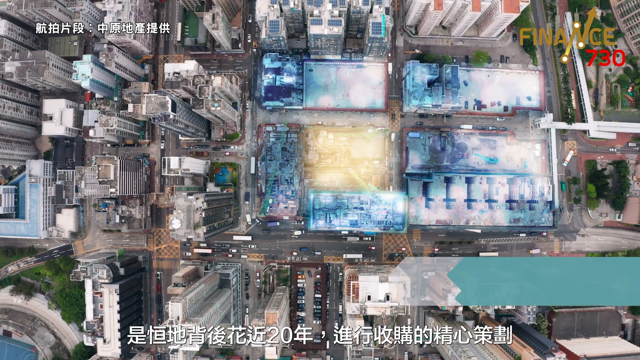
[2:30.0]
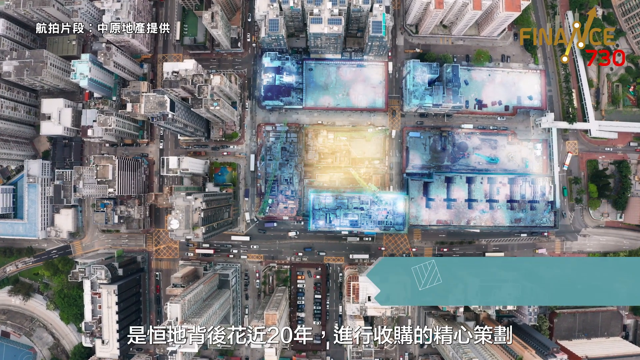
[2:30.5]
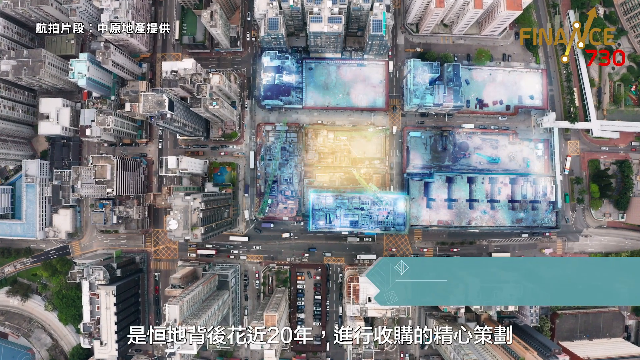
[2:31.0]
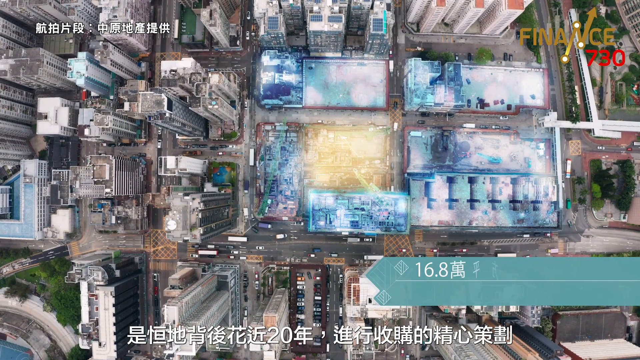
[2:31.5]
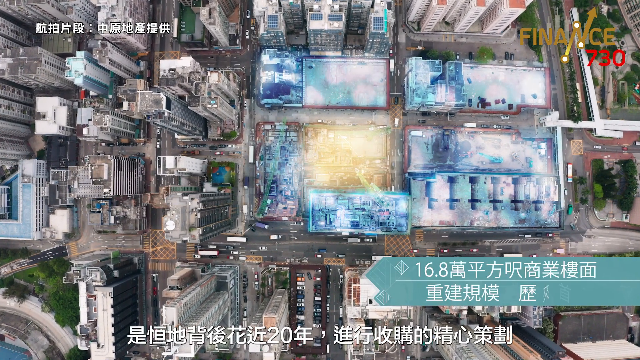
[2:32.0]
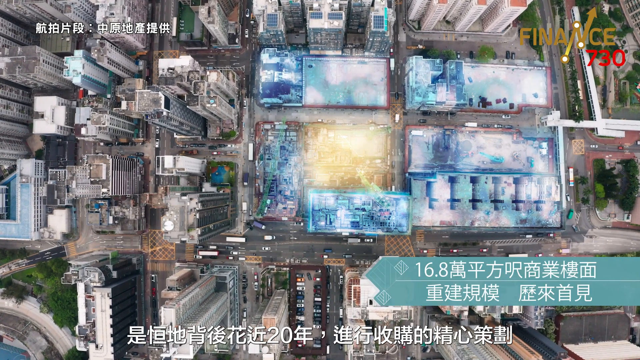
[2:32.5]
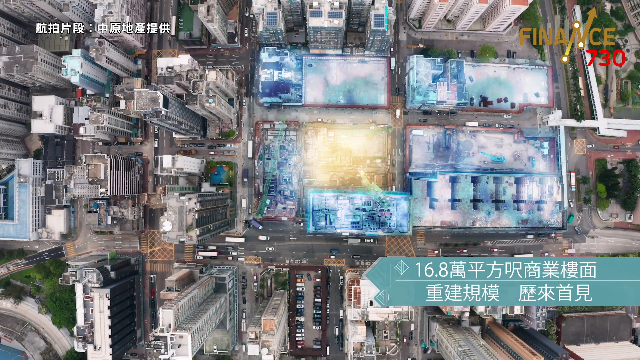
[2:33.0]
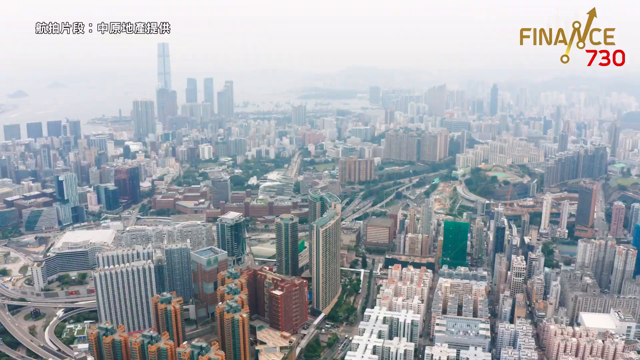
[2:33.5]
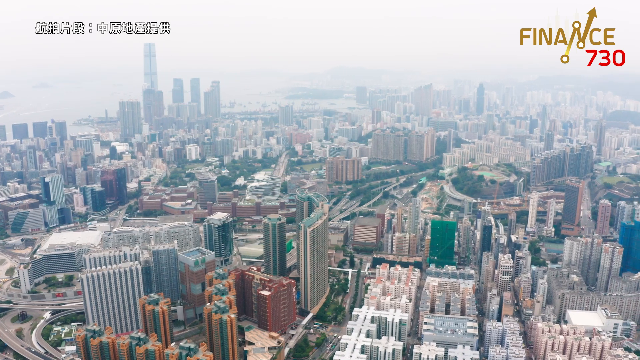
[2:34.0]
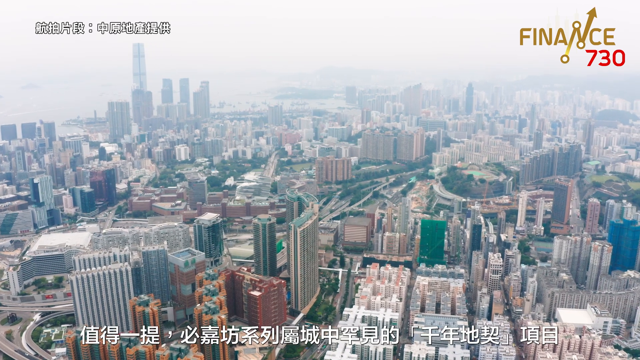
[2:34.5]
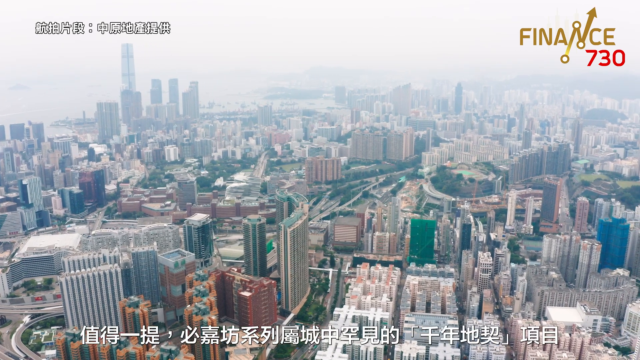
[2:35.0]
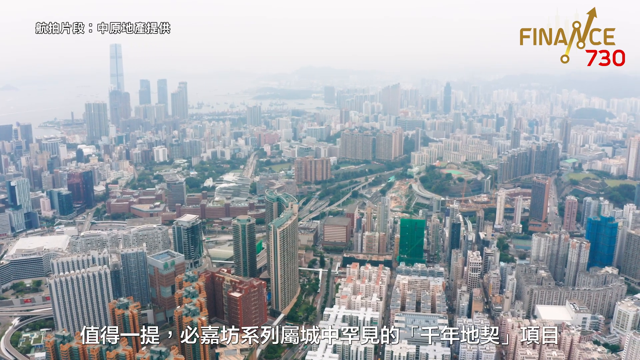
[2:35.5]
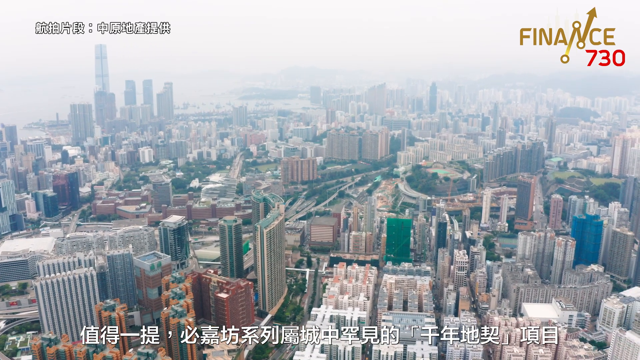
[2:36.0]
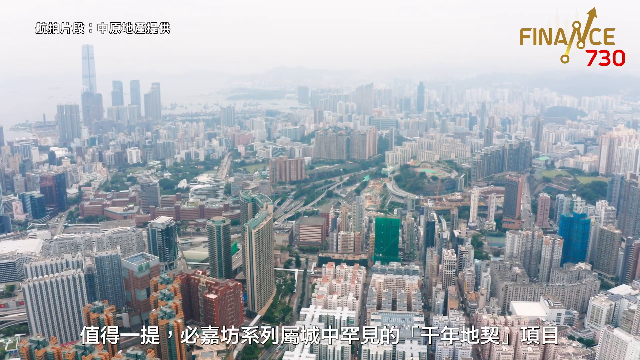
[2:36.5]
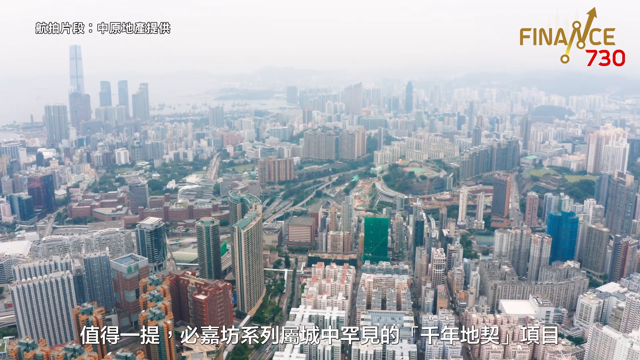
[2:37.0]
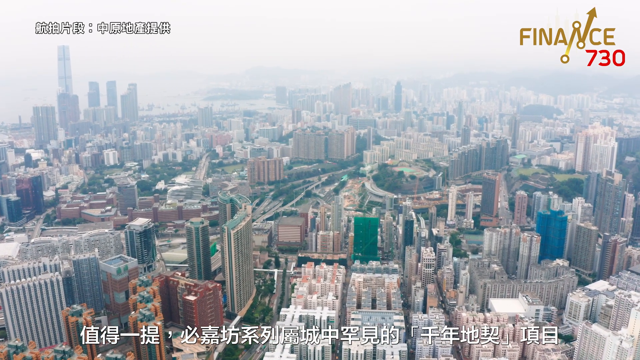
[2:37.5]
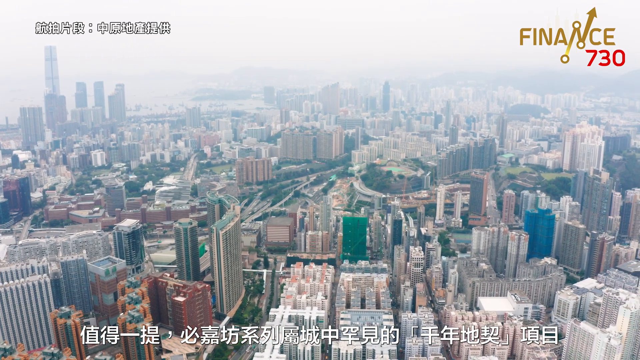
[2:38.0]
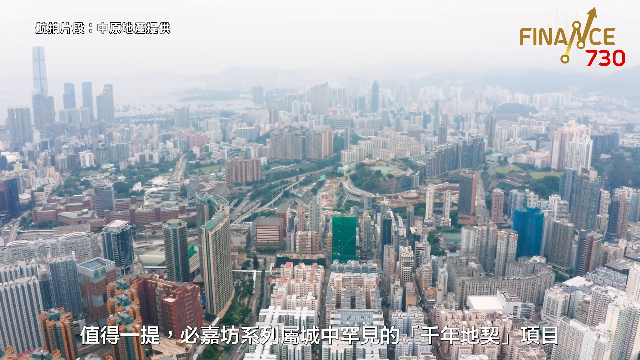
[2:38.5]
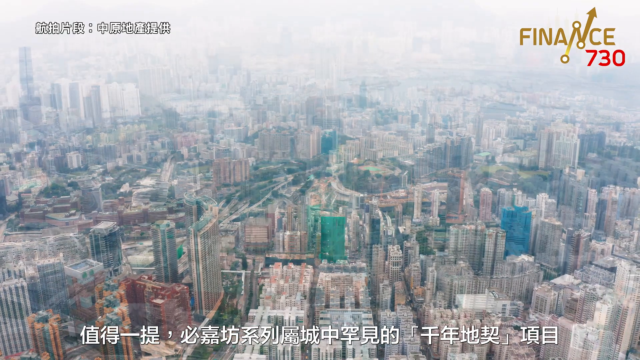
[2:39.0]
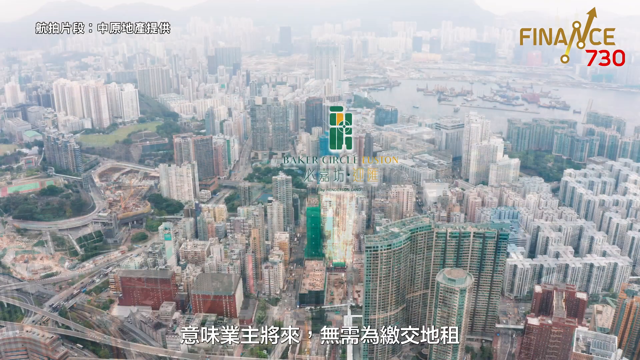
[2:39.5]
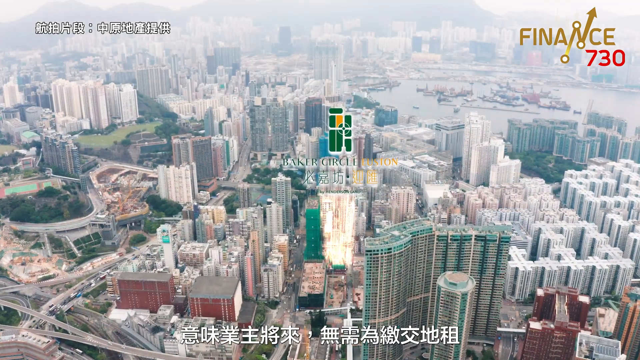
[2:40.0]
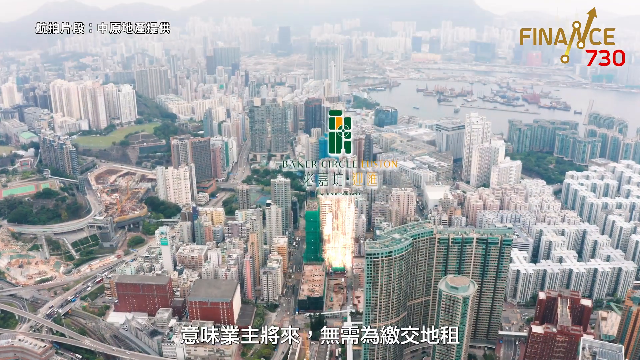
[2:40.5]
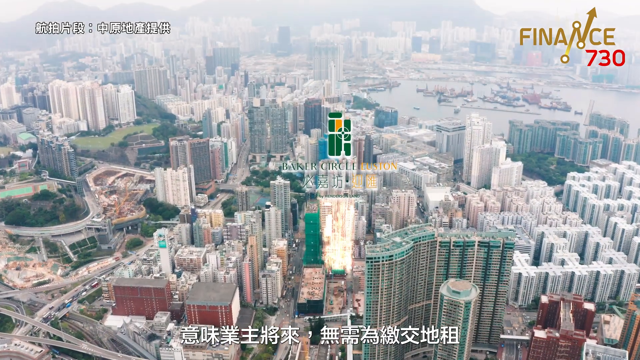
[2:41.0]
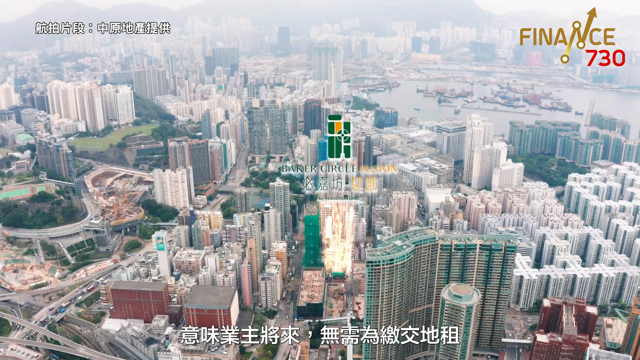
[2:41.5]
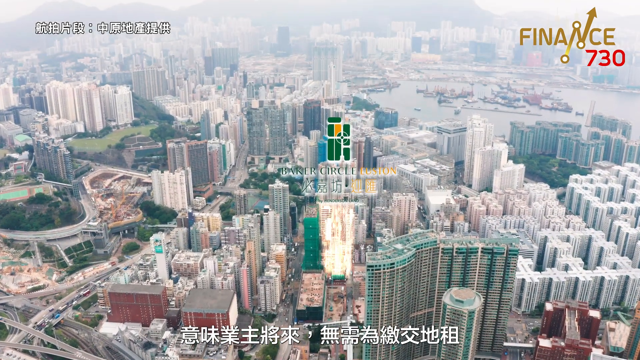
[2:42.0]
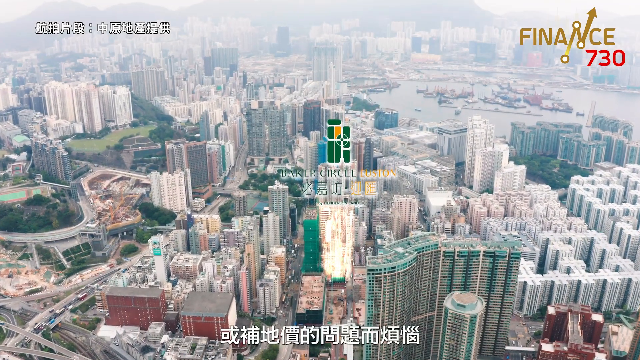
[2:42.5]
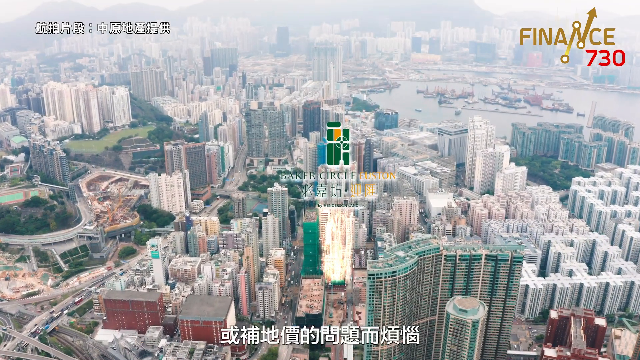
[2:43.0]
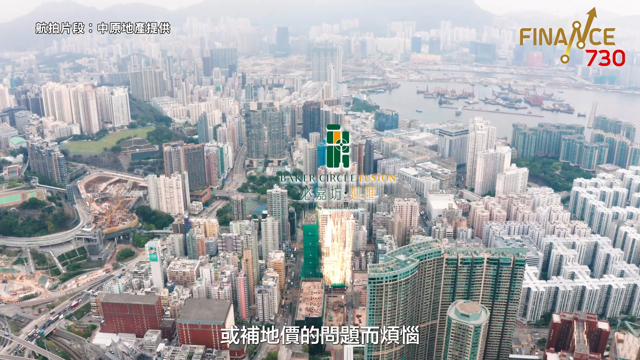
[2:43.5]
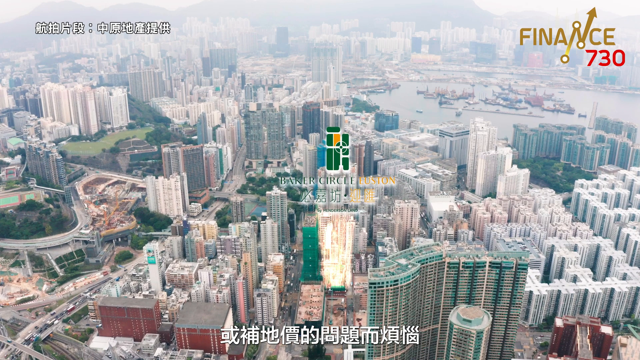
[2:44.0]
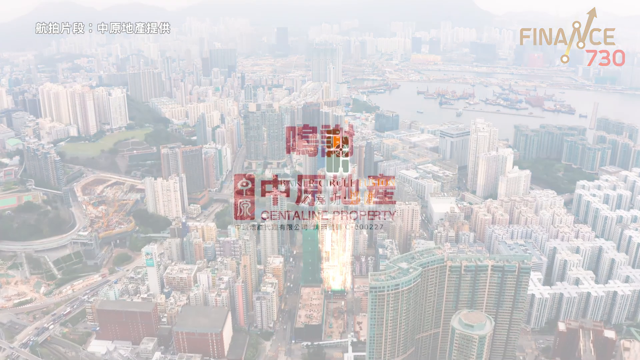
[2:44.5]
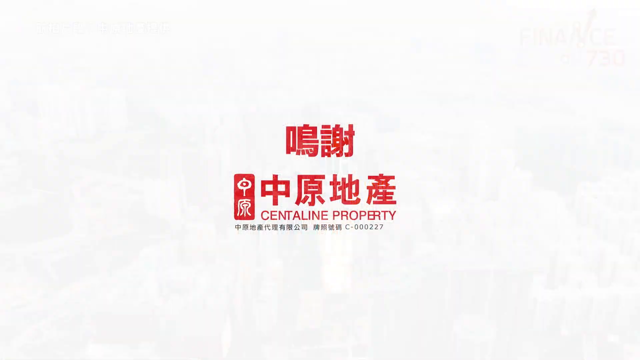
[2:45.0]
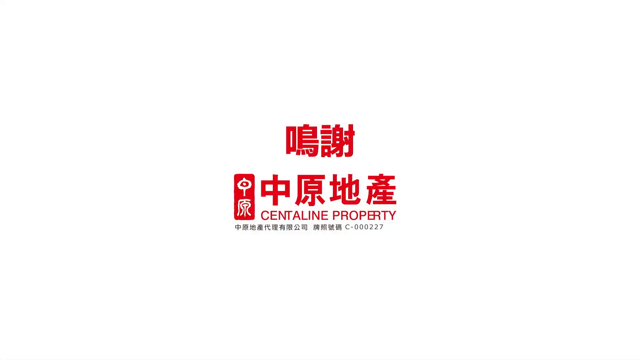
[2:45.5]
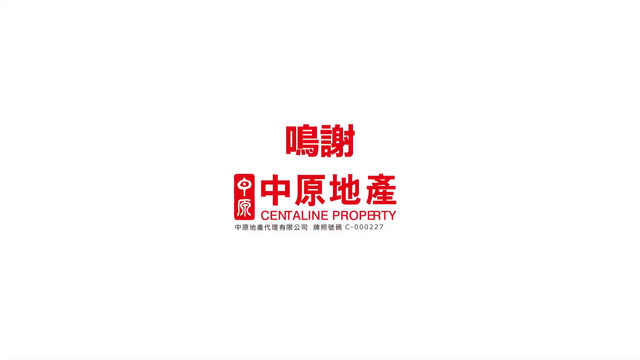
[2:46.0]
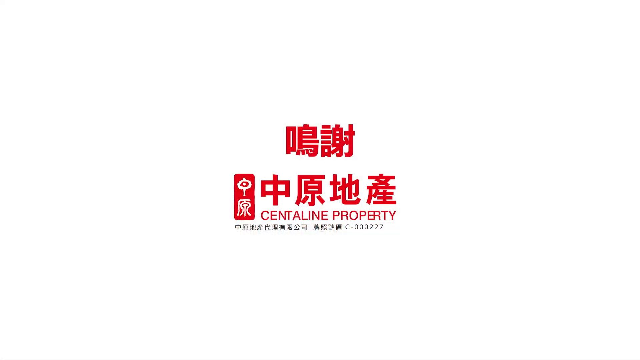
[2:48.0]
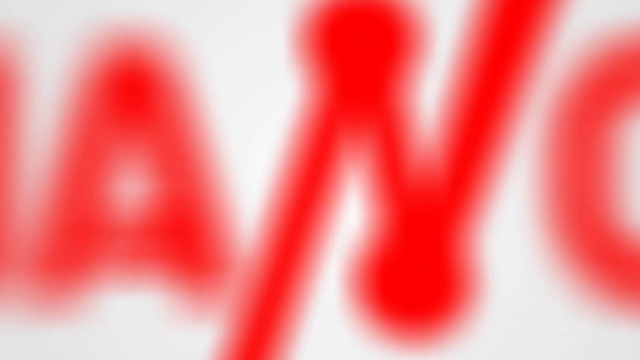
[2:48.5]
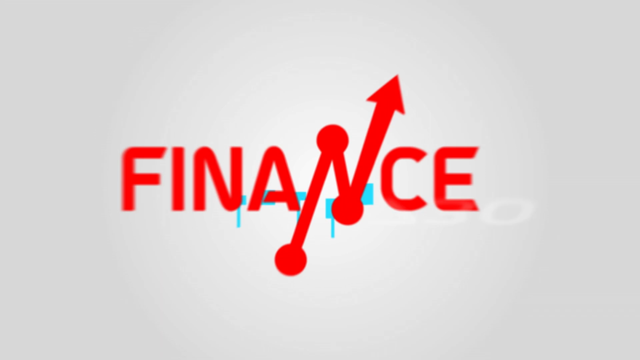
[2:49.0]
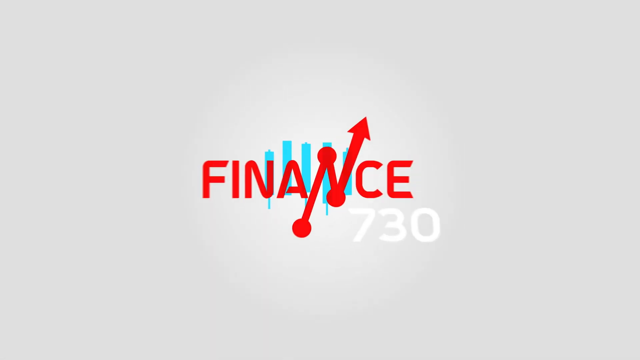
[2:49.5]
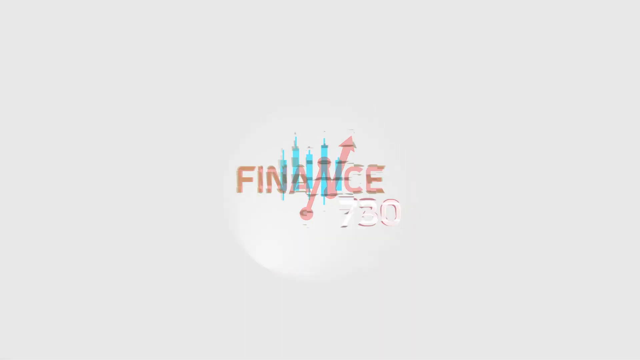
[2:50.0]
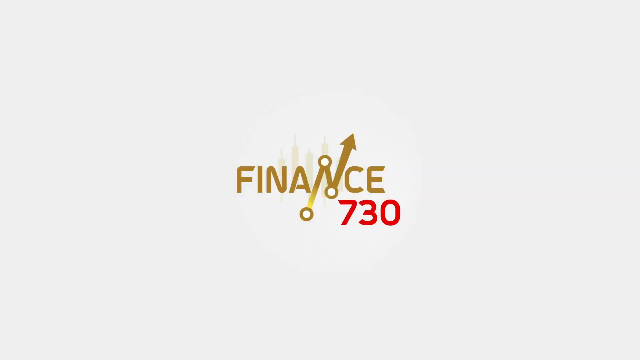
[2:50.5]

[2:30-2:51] An overhead view shows a large city, apparently Hong Kong, with a logo in the top right corner that says "Finance 730". The aerial view goes around overhead over highways and many high-rises. A building is highlighted with the label "Baker Circle", and the view shows how tall it is. Some writing in Asian characters appears across the bottom of the screen. After that, a screen comes up with Asian characters and the words "Centelline Property" in red letters. The screen then switches to "Finance 730" in a big circle with buildings in the background, and from there goes once more to the overhead view of the entire city, with water in the background.